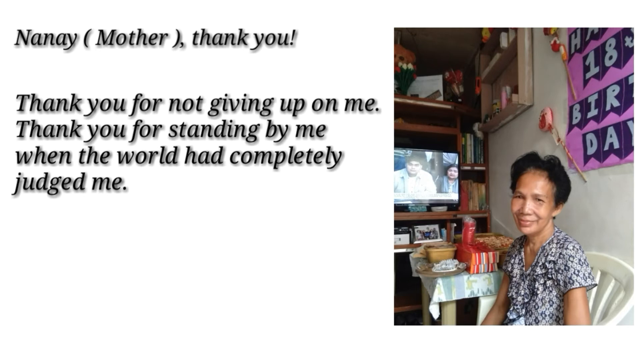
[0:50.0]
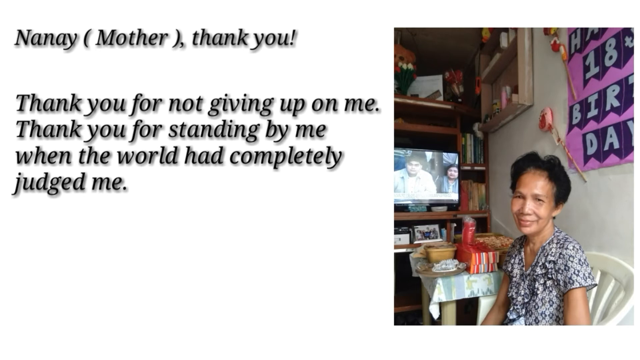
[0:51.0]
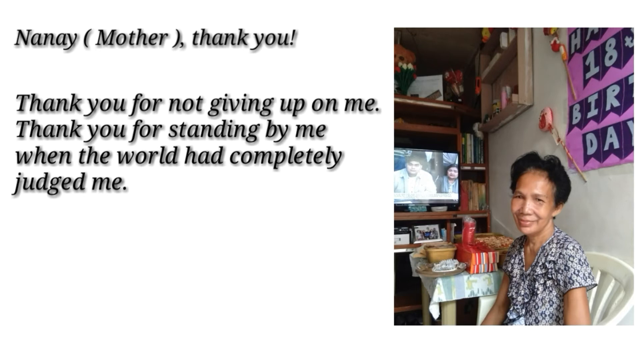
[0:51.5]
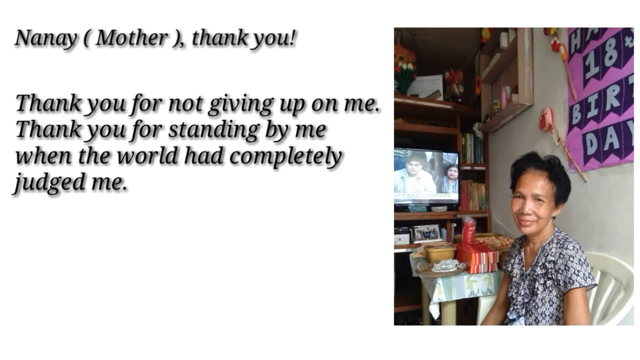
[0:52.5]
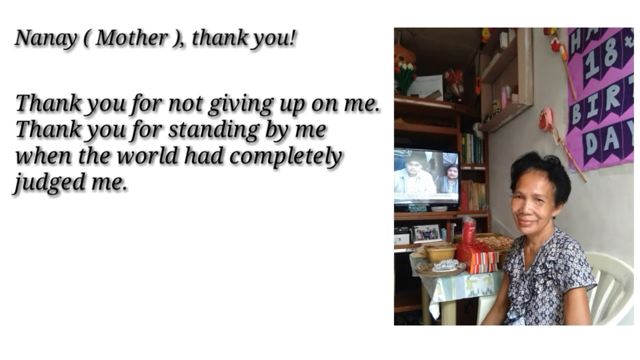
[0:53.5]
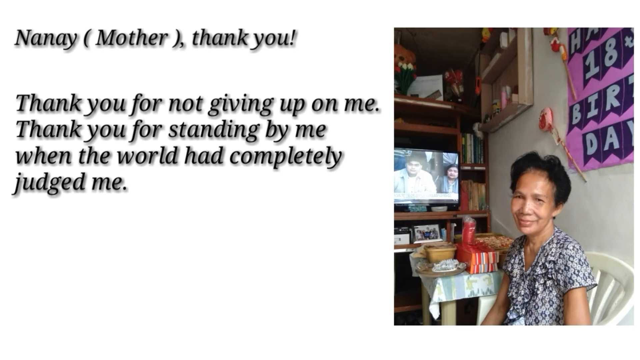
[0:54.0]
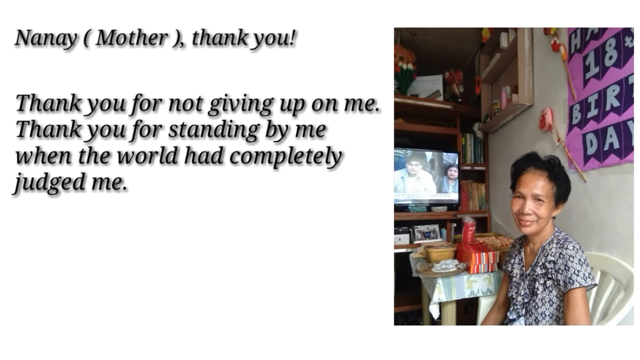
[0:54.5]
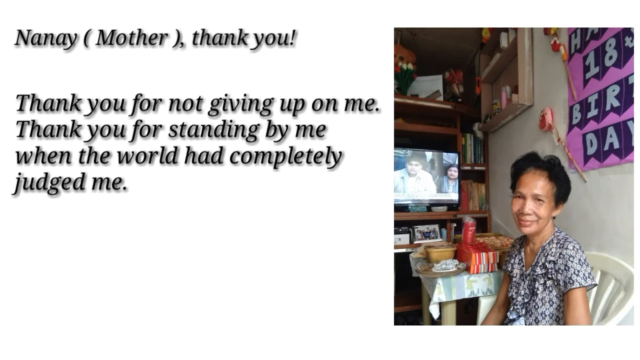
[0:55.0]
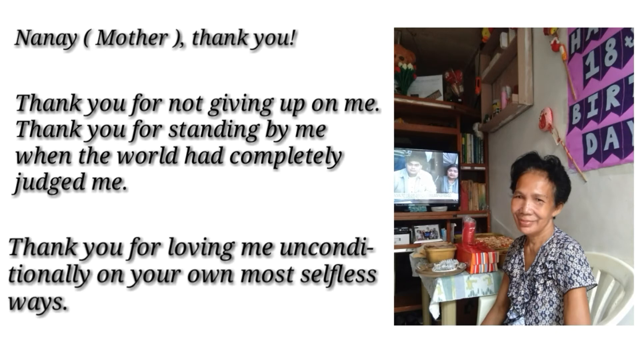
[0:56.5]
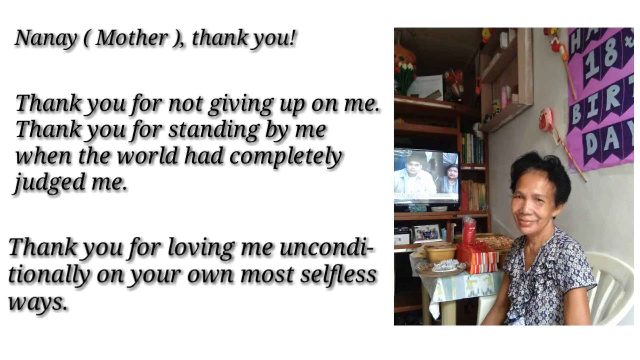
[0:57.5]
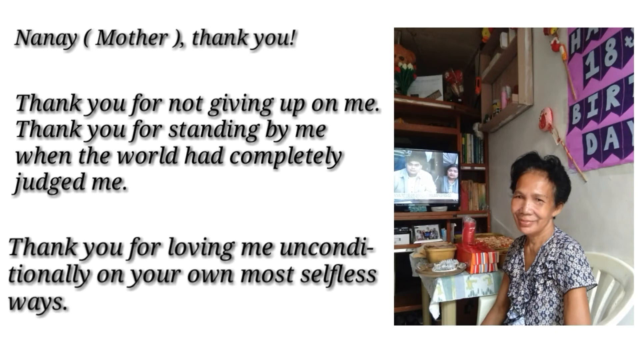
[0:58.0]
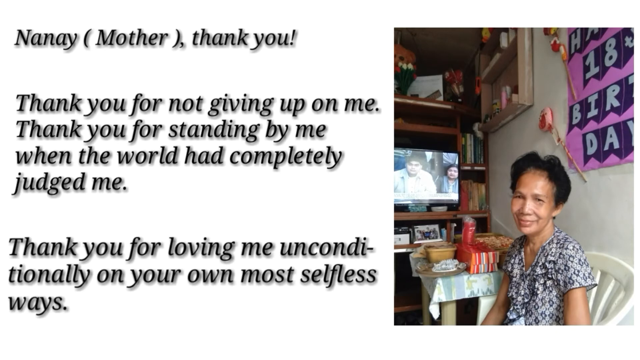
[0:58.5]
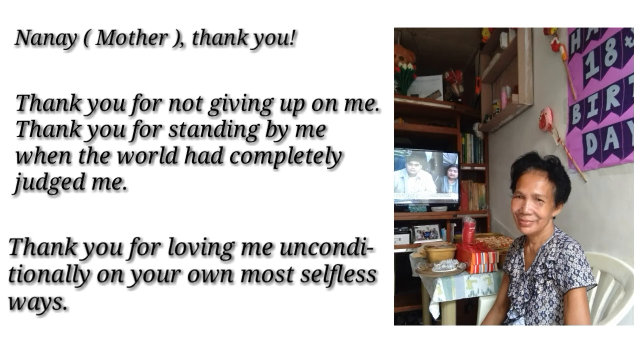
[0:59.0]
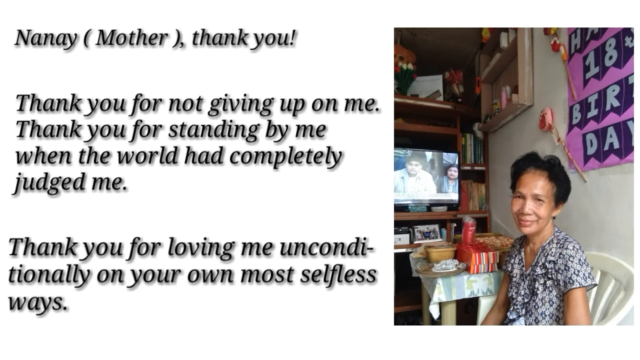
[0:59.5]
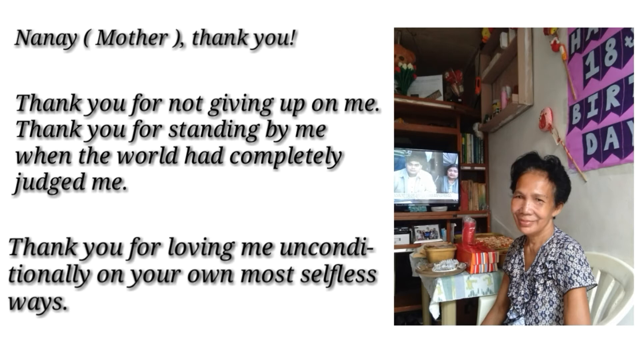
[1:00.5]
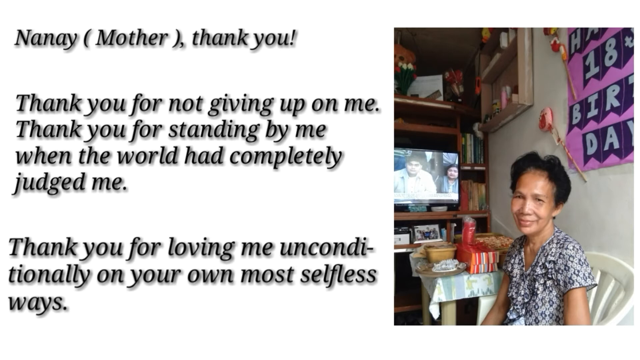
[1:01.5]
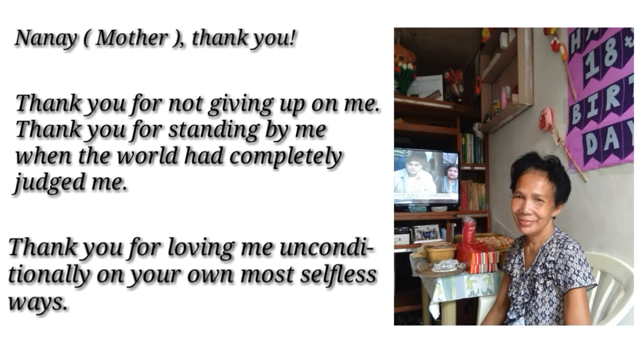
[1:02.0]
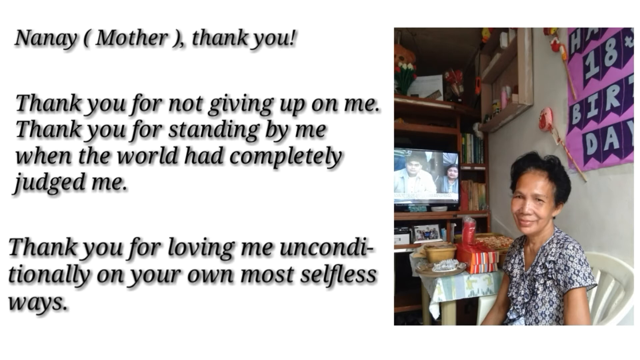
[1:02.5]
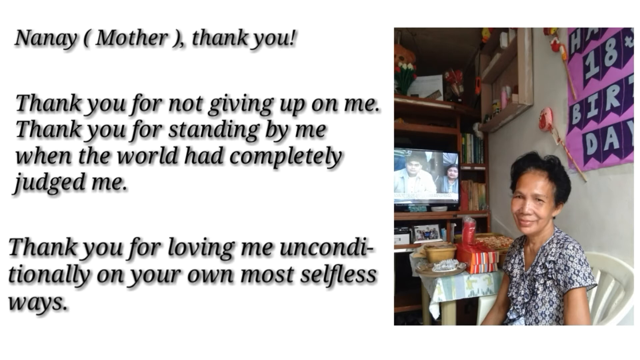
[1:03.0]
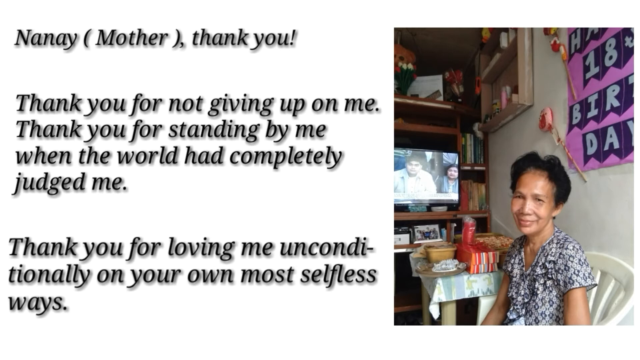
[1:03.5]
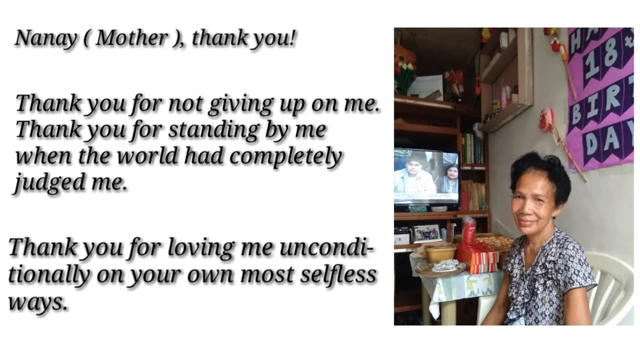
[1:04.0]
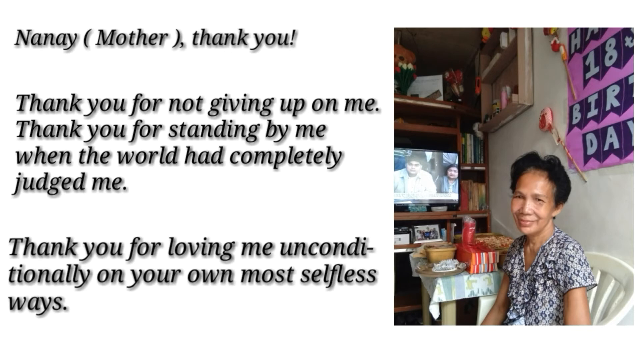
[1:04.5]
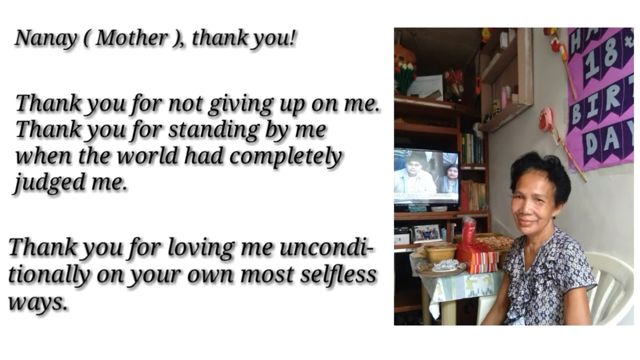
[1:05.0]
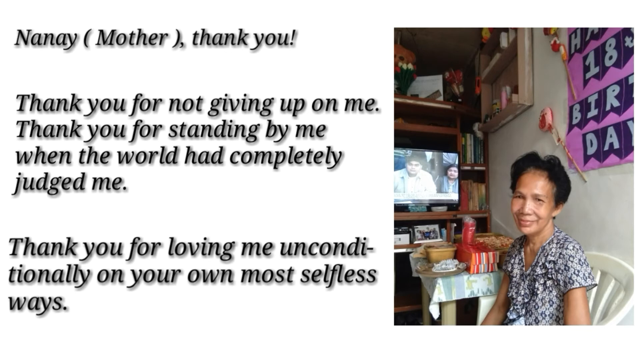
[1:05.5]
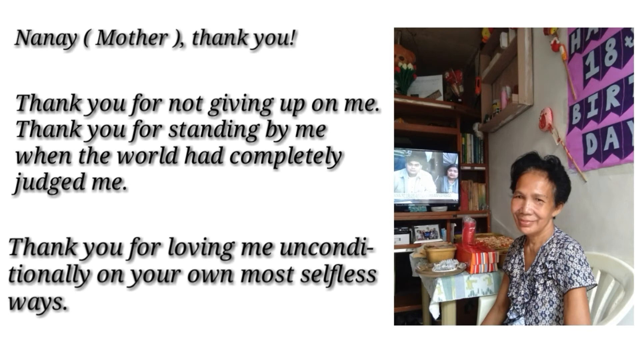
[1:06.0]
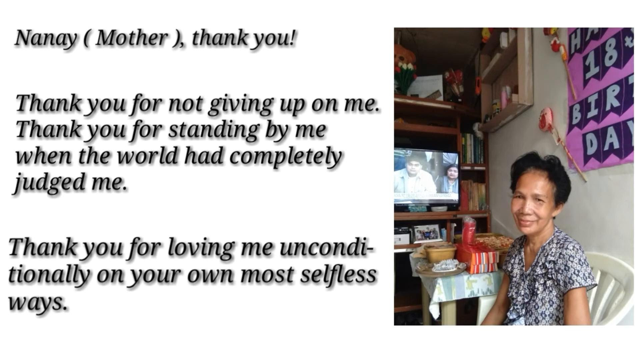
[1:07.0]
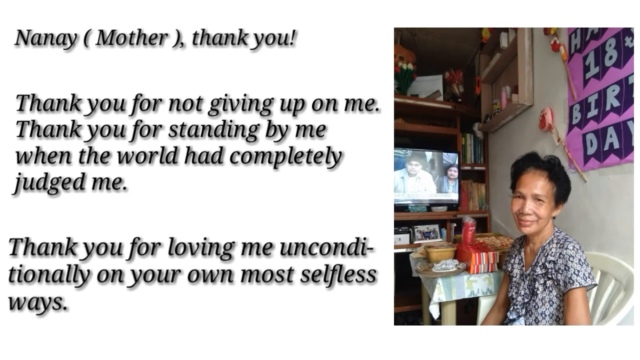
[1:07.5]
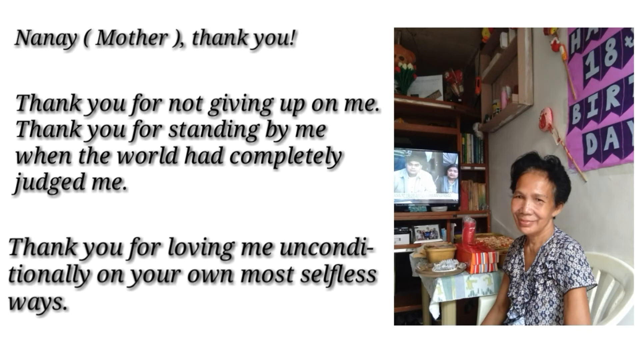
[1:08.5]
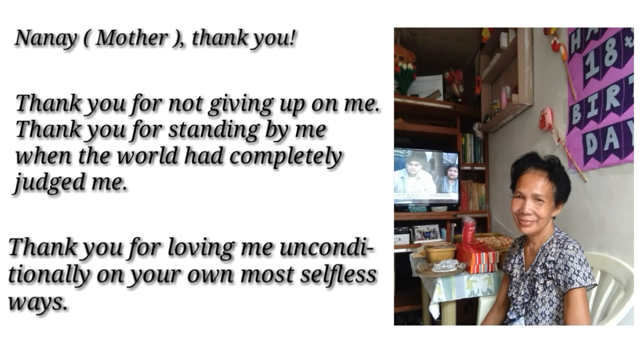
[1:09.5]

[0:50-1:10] The setting appears to be at home, with a TV in the background, so this is not a restaurant. It could be a birthday, possibly someone's 18th, perhaps the daughter's. Items on a table are hard to make out at first; they appear to be two gifts. It is unclear whether something at the far right is food. She appears very happy to be there.